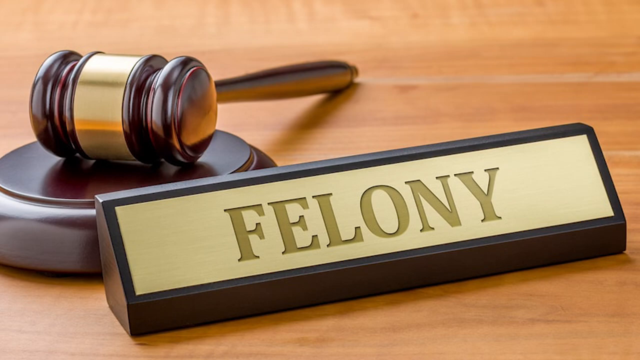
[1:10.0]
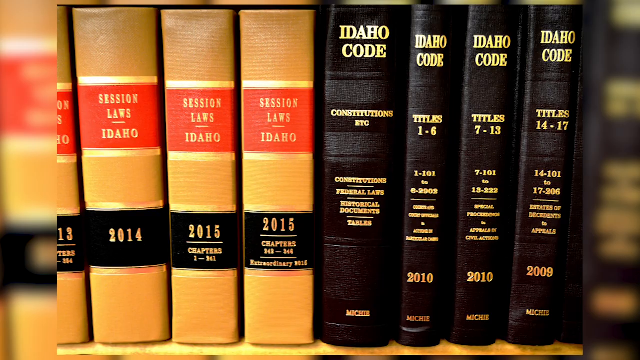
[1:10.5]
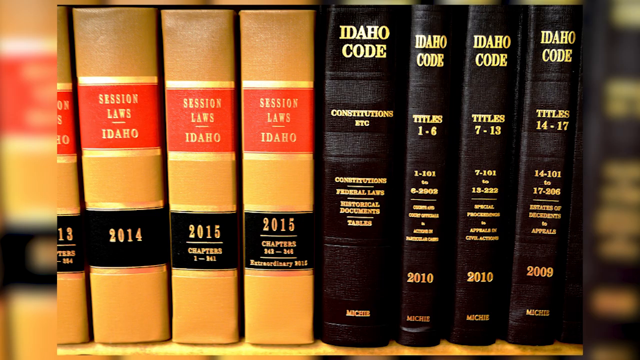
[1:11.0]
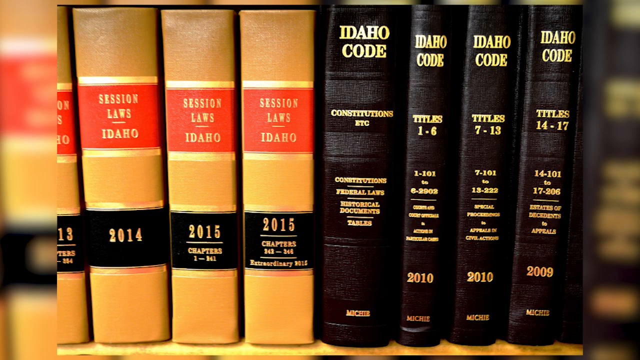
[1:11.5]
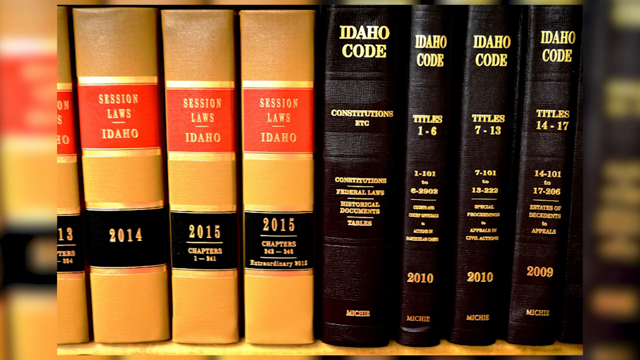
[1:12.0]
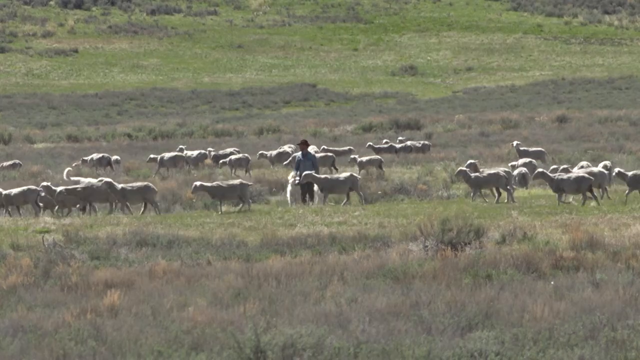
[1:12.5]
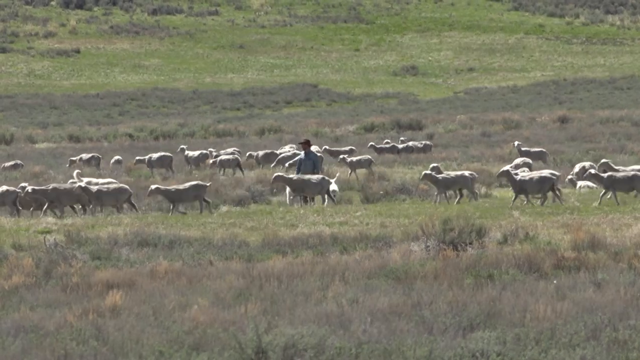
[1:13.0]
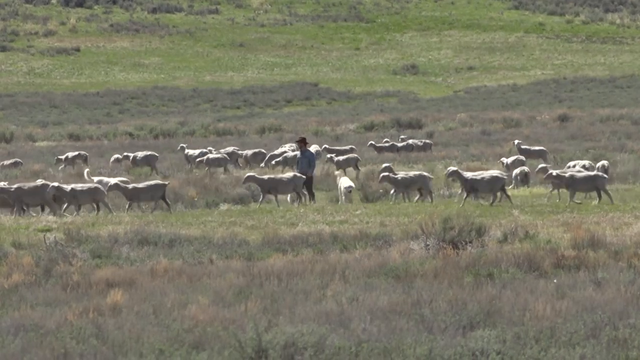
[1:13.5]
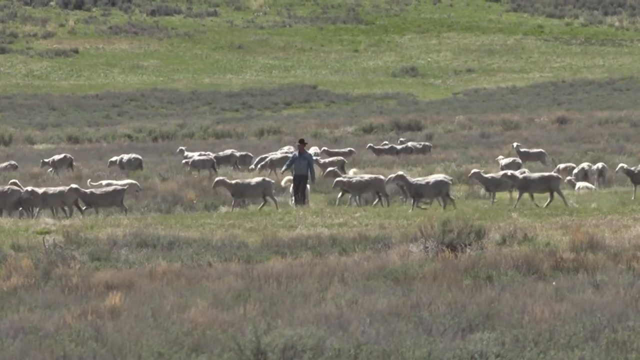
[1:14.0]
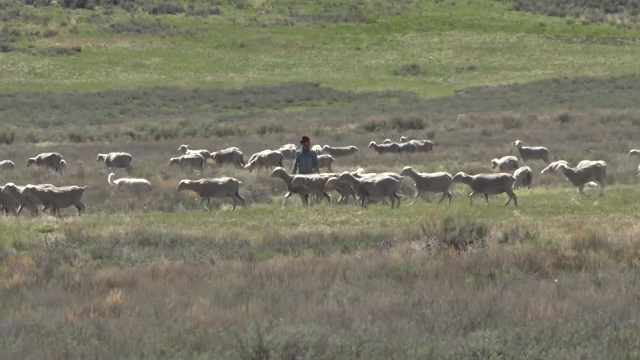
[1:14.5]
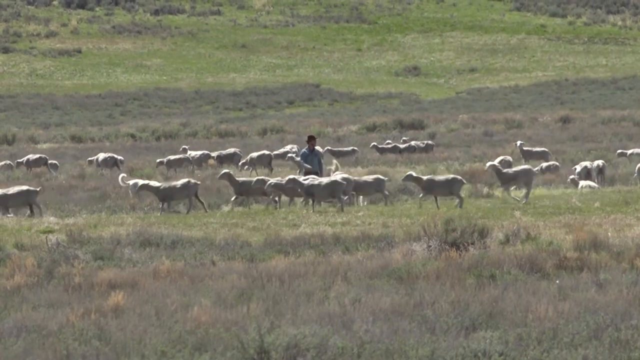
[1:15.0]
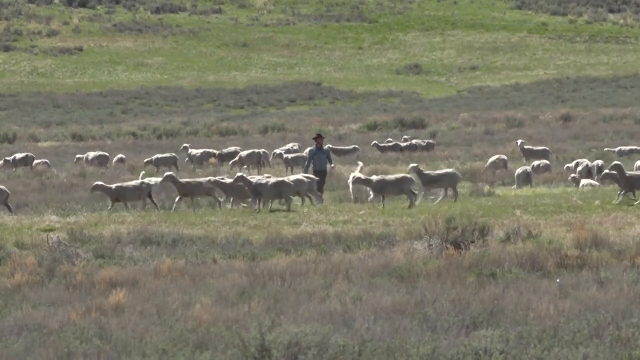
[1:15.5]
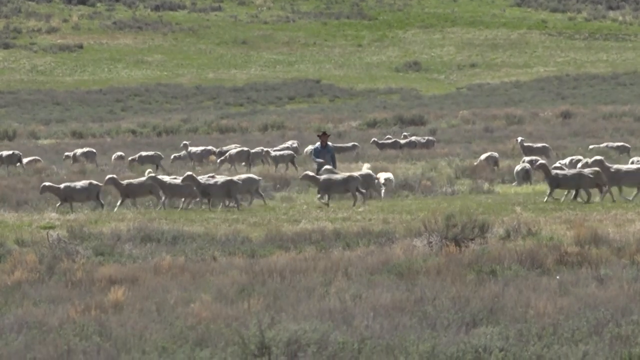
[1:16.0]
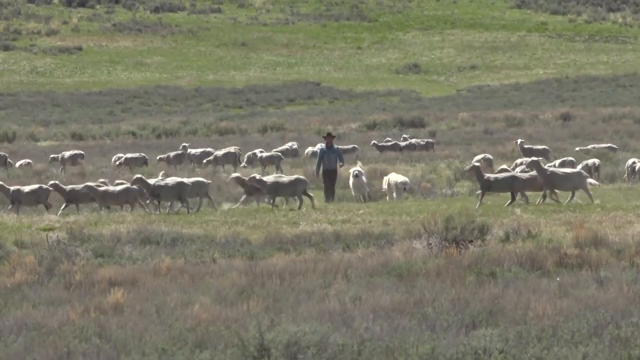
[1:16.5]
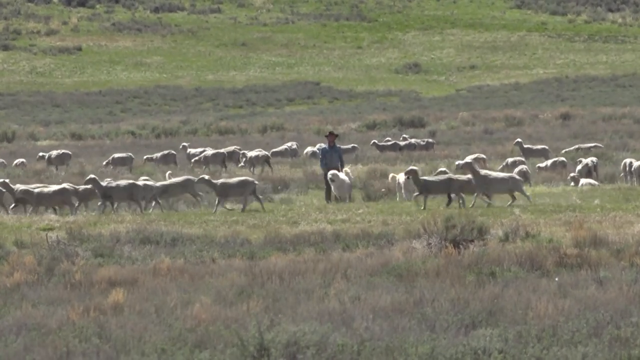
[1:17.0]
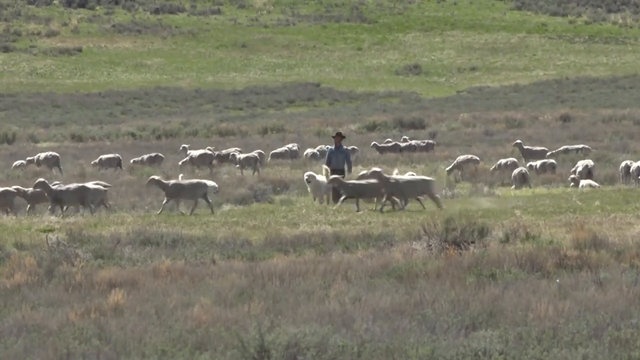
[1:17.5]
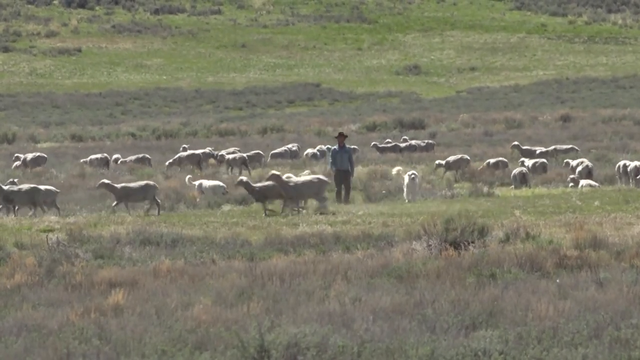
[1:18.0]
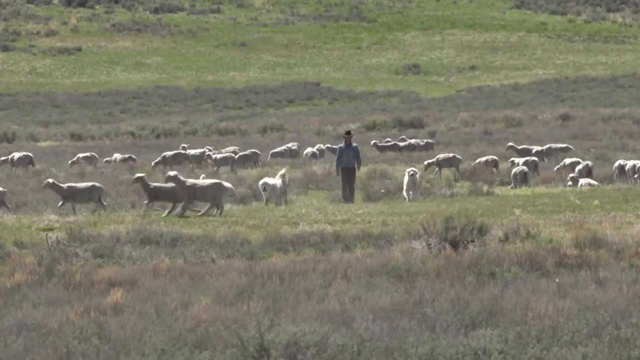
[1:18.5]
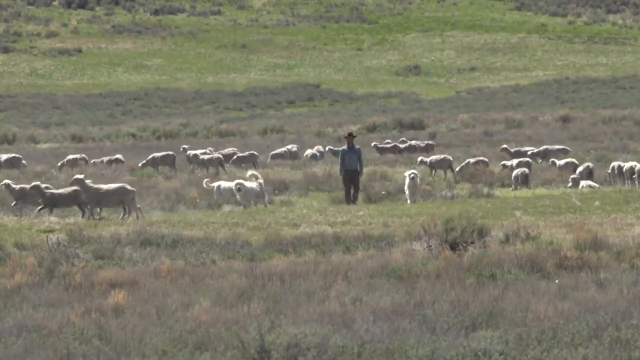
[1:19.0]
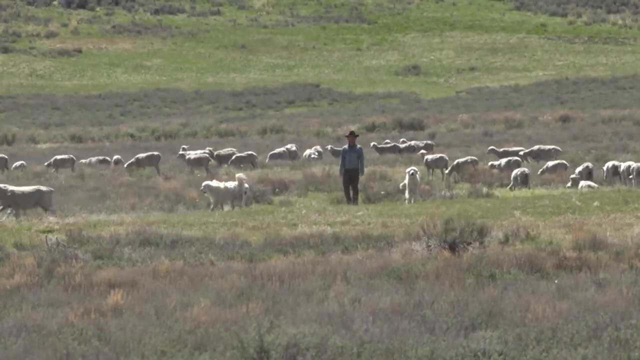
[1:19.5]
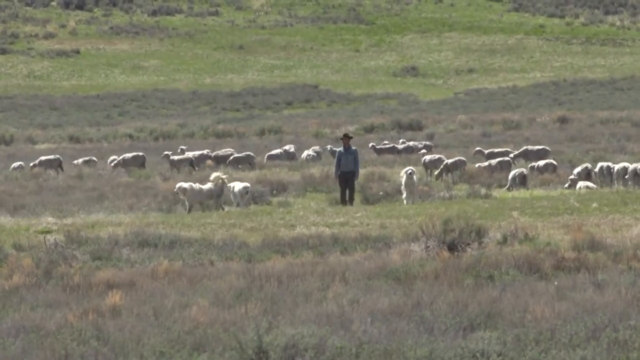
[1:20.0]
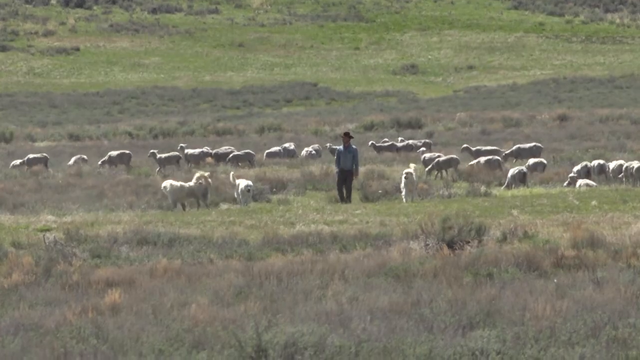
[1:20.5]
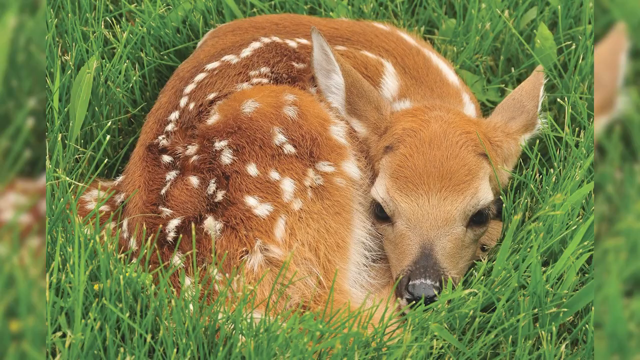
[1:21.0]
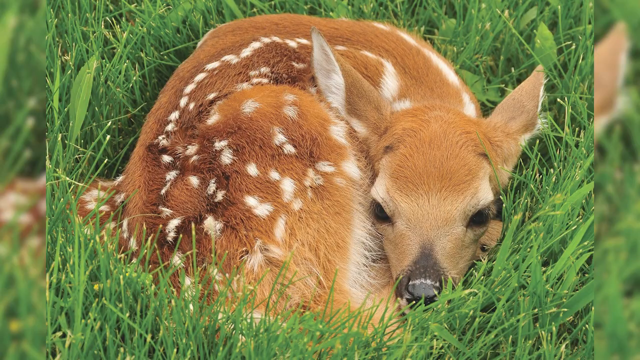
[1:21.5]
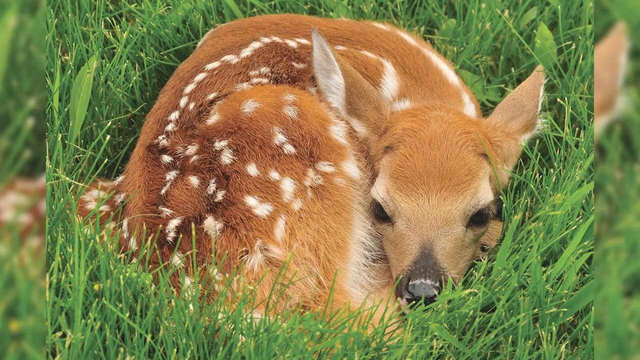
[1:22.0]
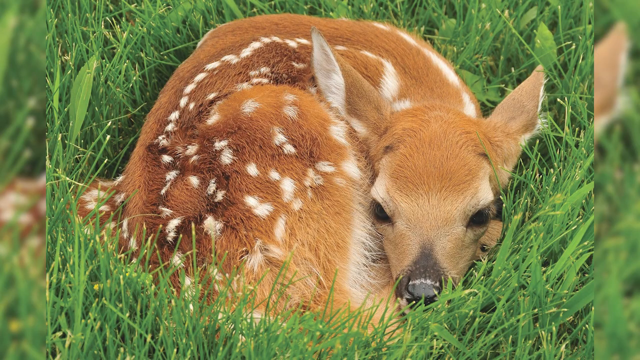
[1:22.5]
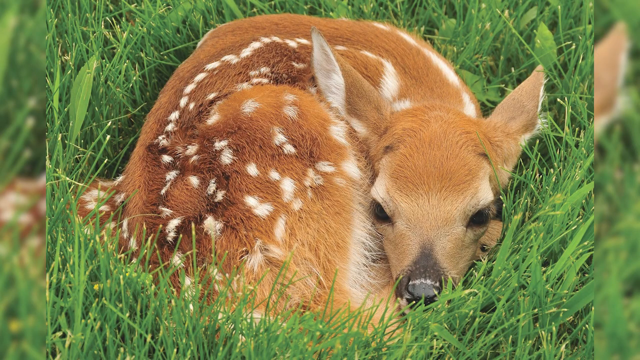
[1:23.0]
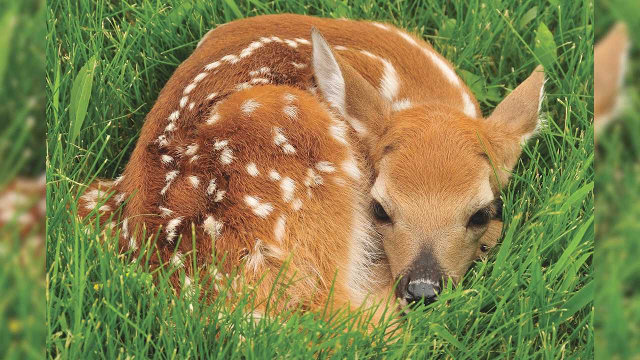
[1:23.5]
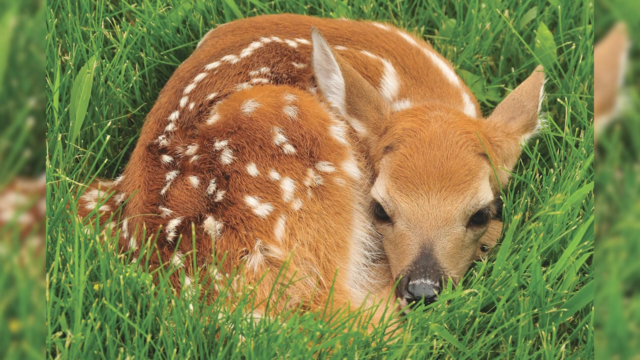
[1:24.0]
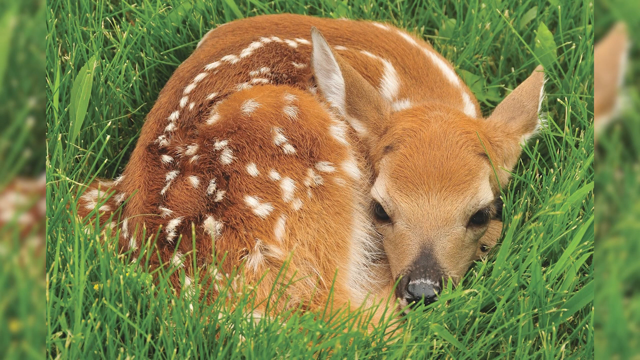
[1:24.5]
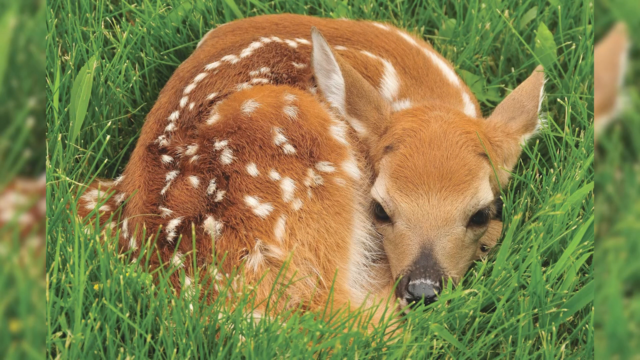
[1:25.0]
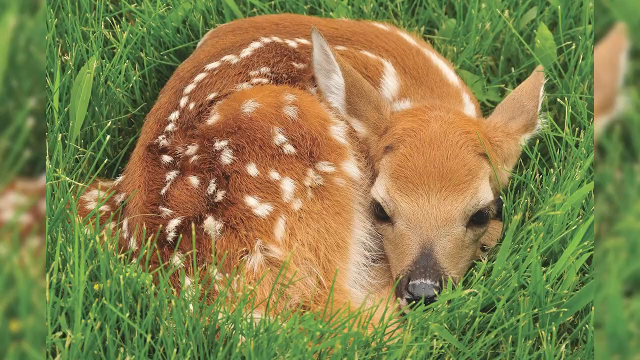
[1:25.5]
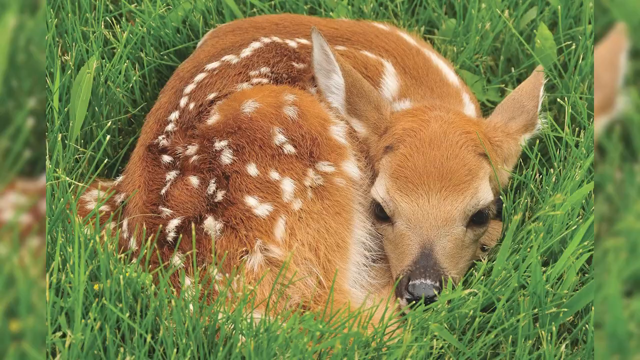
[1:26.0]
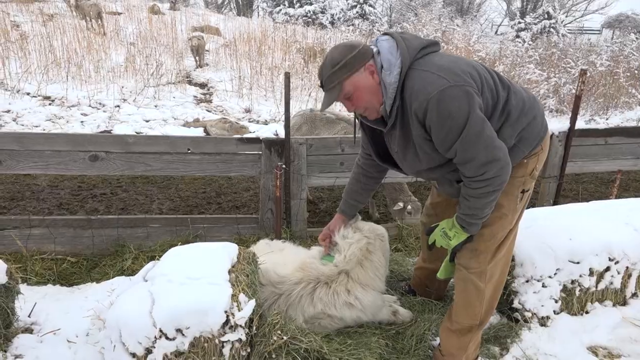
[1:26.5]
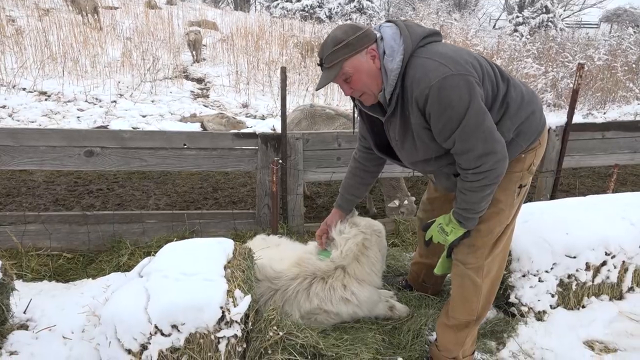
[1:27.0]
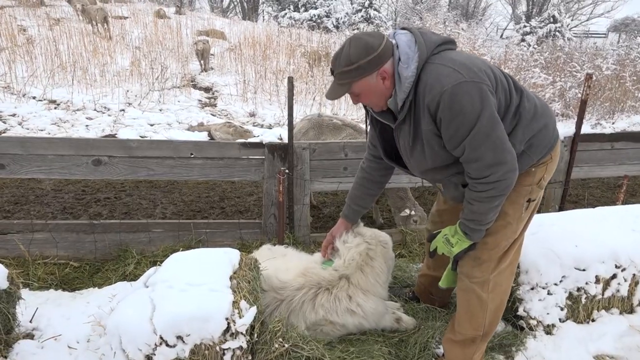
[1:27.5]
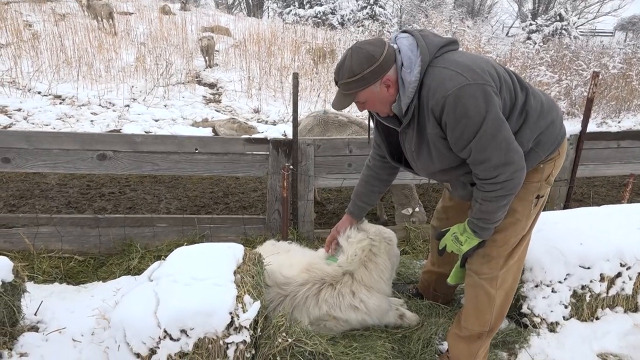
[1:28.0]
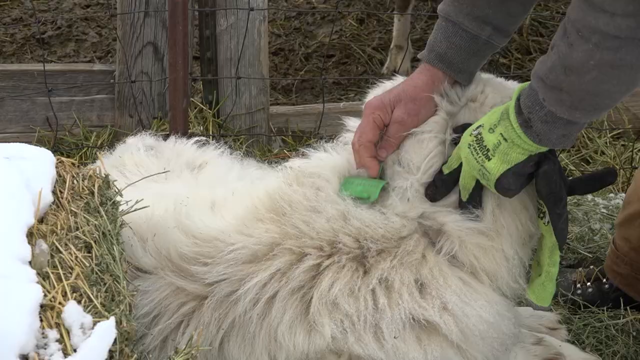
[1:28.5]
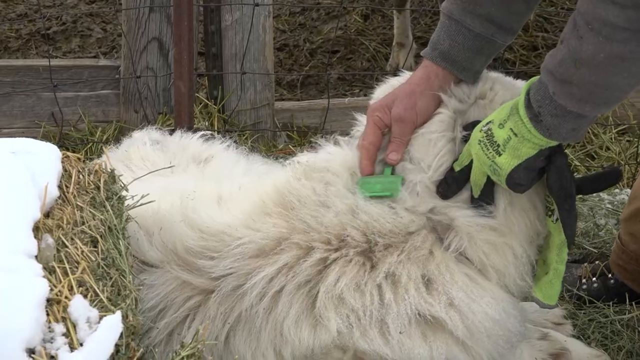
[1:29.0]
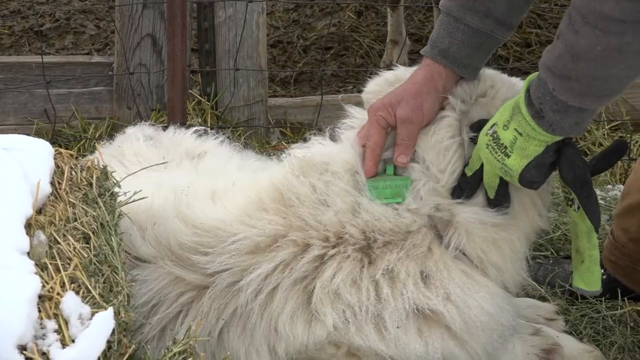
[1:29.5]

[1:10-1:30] On a wooden desk is the word "felony", with a cover resting on an object that appears to be a sound block. Next come some books that look like law books, in brown and red. One reads "Session Laws Idaho 2014"; others are for 2013 and 2015, one with chapters starting at 1, and another 2015 volume apparently with chapters starting at 140. There is also an Idaho hardcover book, along with "Idaho Code Constitution", "Idaho Code Titles 1 to 6", "Idaho Code Titles 7 to 13", and "Idaho Code 14 to 17". Sheep then graze with their guard dogs, and a shepherd walks around with them. A little deer with brown, white-dotted fur lies folded in the green grass, looking comfortable. A gentleman examines one of the sheep and puts tags on it.